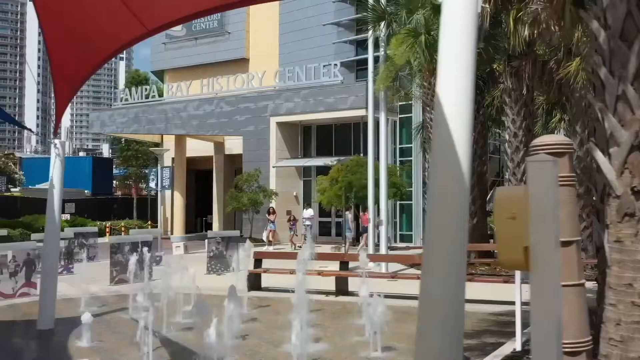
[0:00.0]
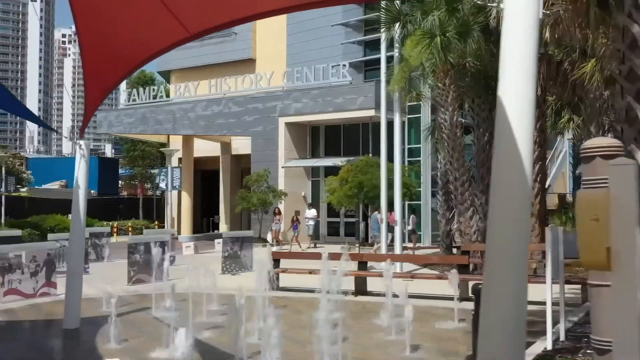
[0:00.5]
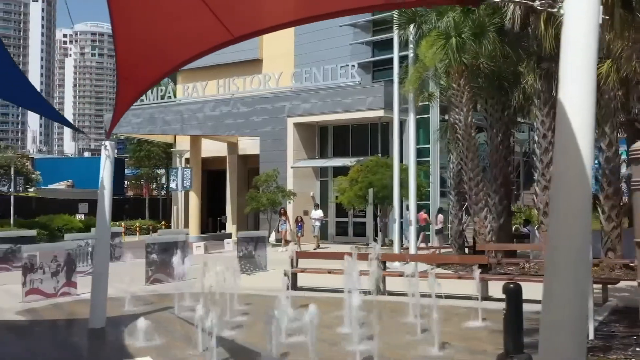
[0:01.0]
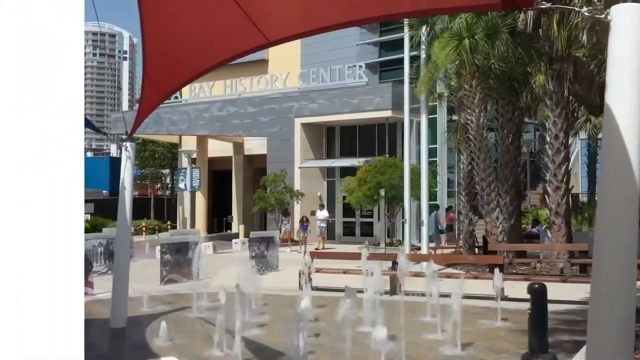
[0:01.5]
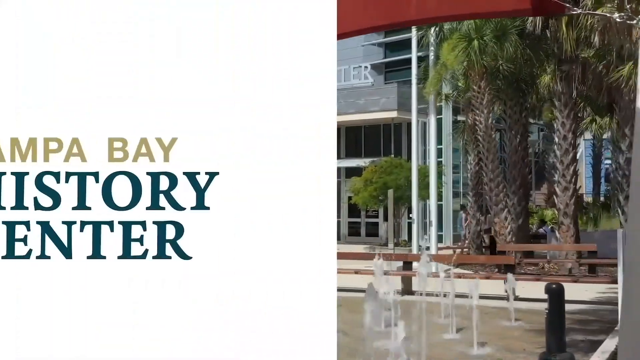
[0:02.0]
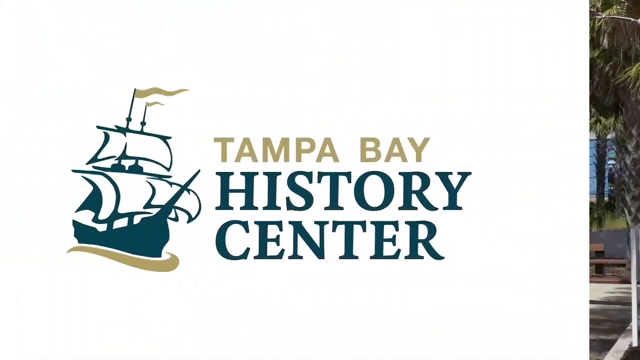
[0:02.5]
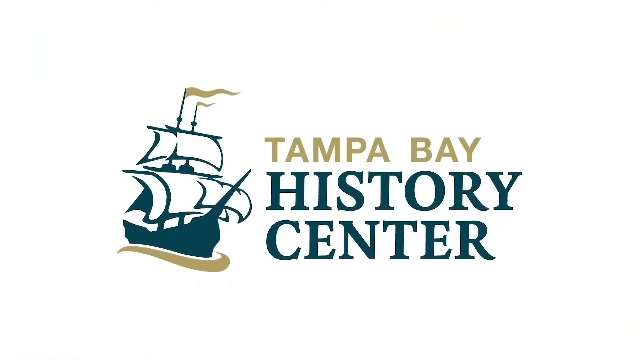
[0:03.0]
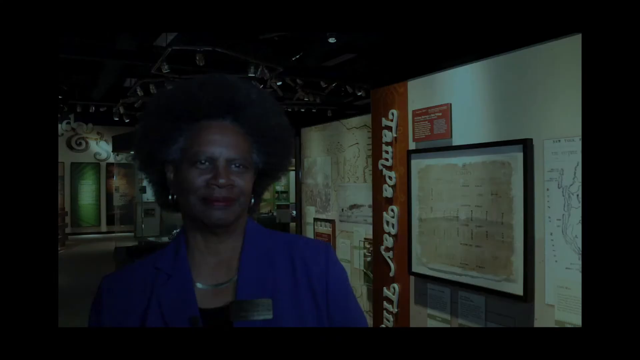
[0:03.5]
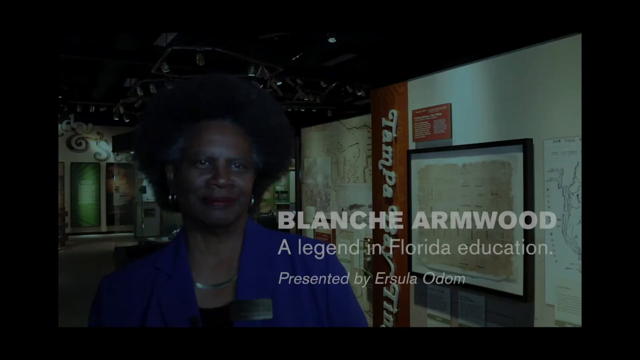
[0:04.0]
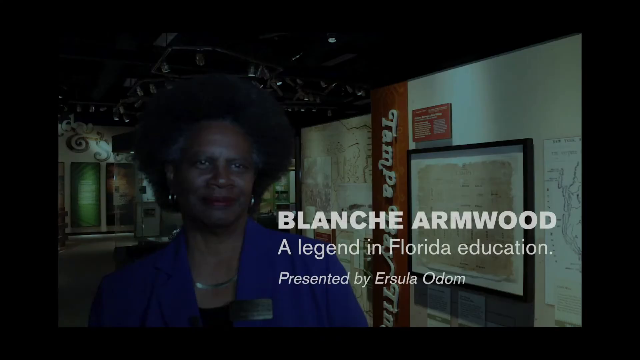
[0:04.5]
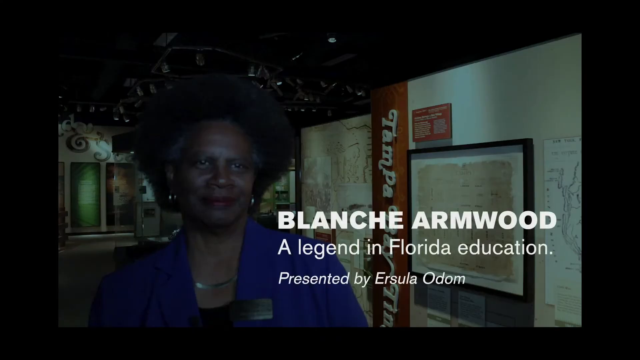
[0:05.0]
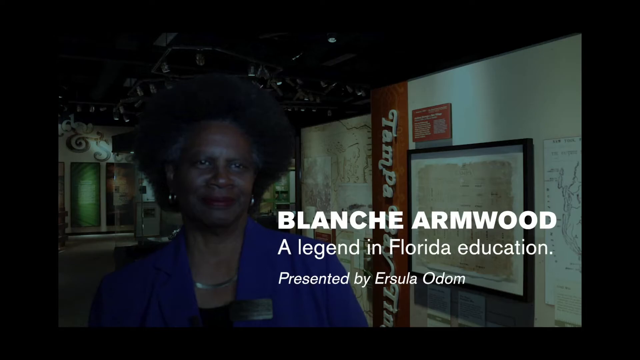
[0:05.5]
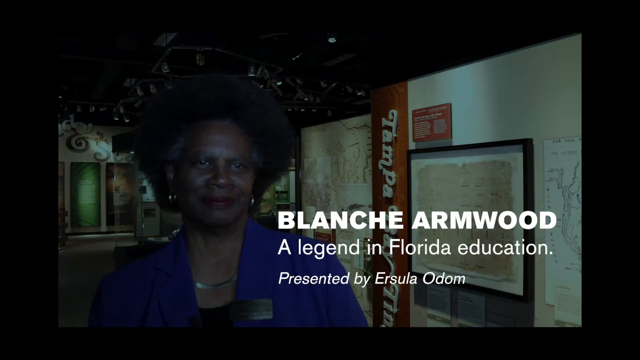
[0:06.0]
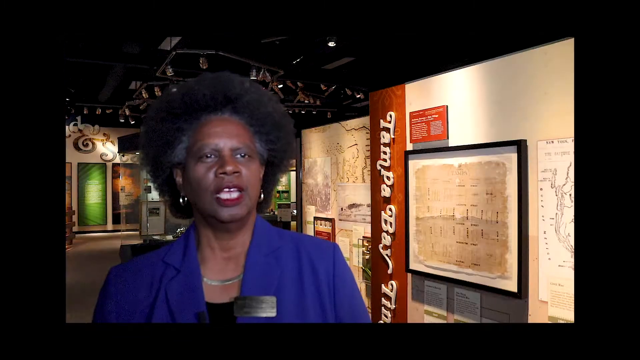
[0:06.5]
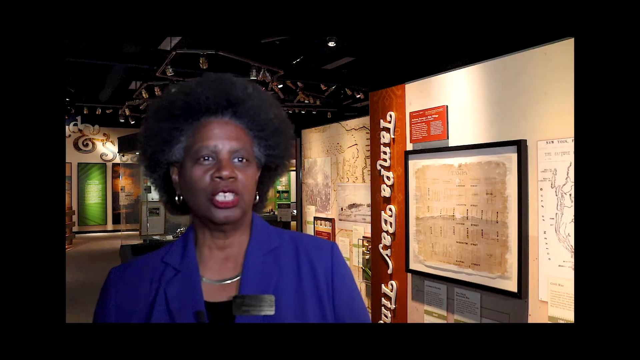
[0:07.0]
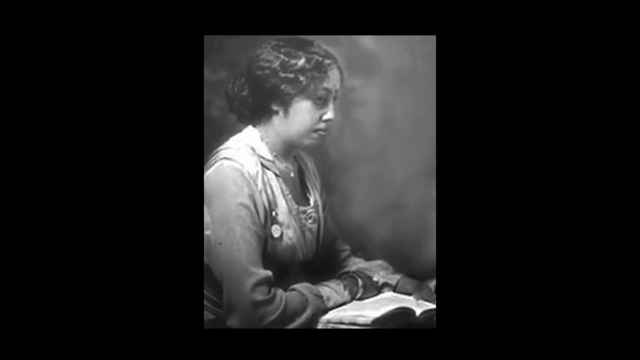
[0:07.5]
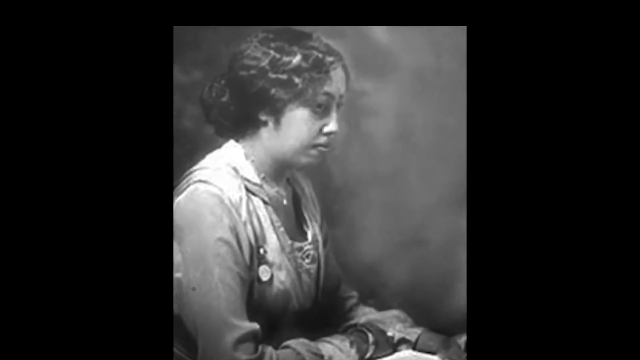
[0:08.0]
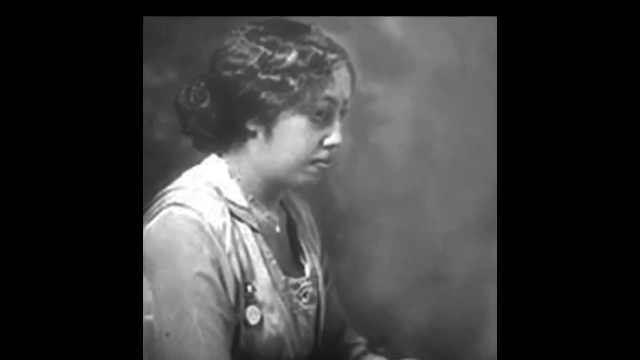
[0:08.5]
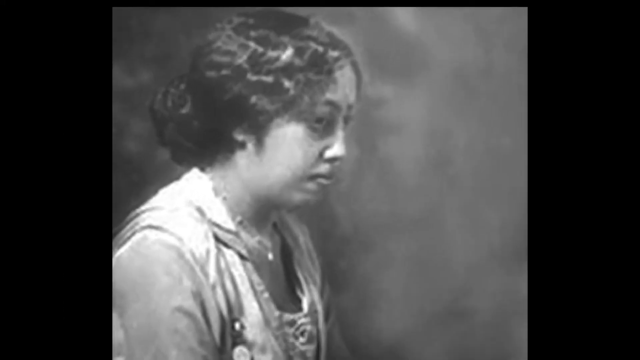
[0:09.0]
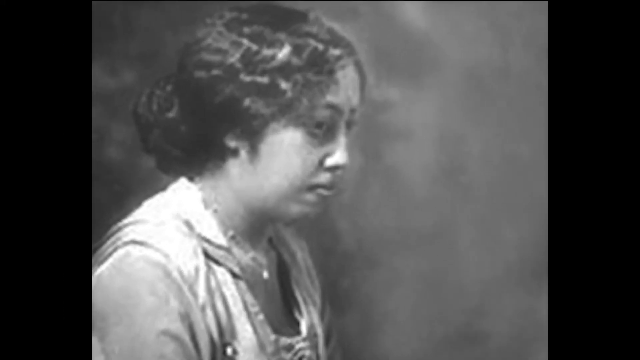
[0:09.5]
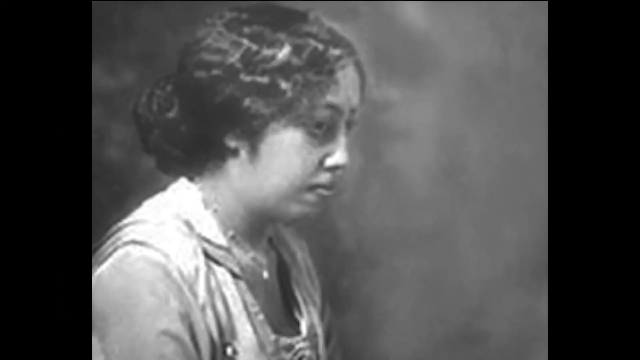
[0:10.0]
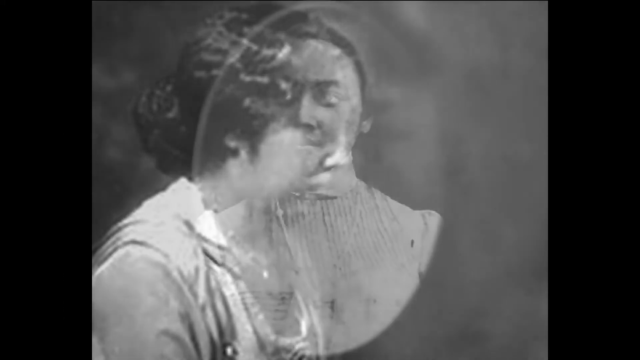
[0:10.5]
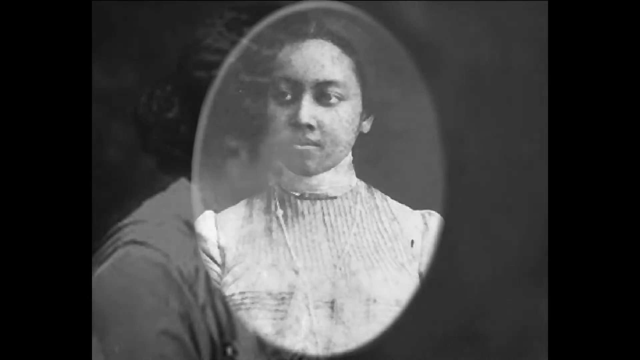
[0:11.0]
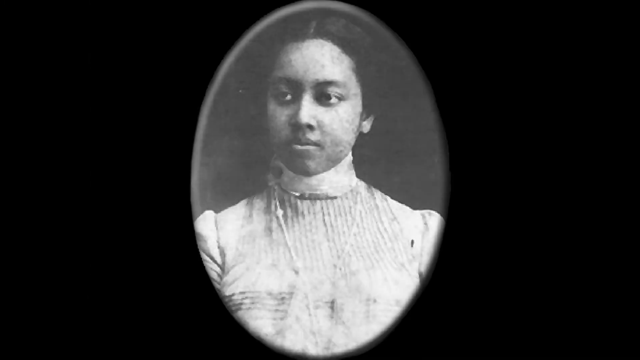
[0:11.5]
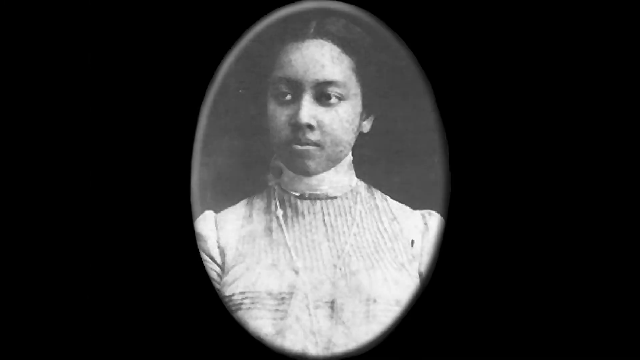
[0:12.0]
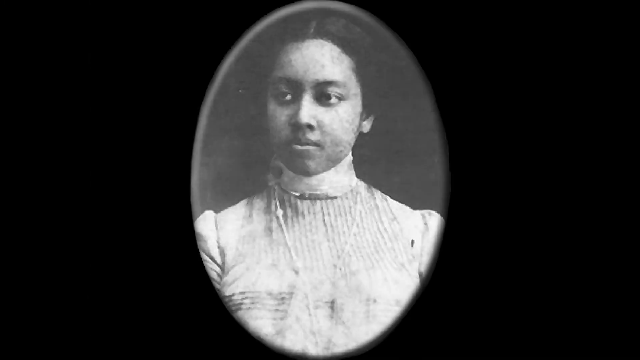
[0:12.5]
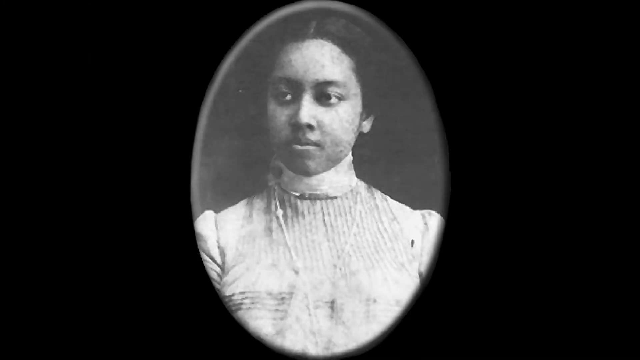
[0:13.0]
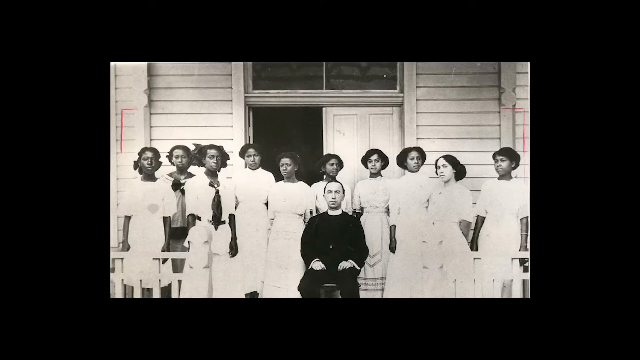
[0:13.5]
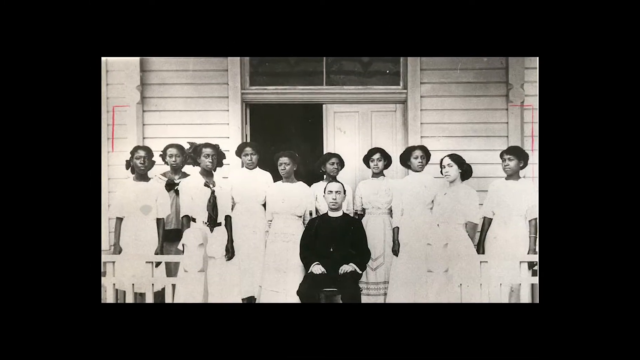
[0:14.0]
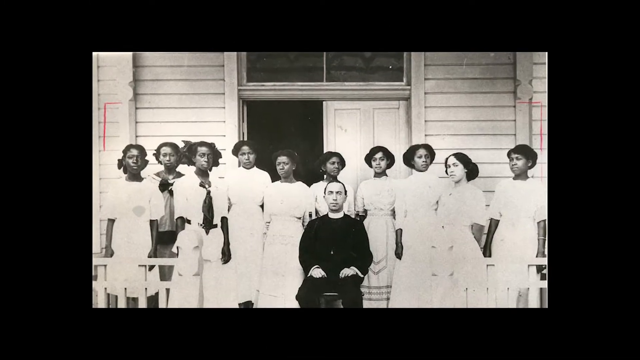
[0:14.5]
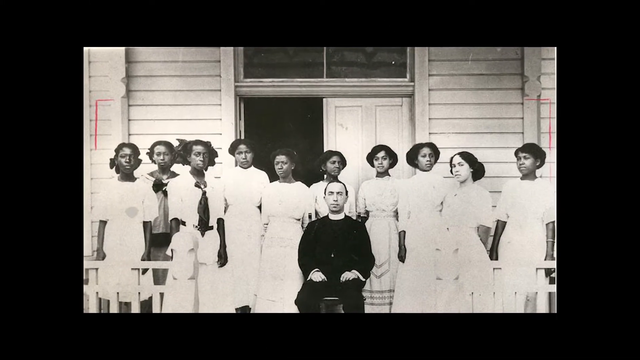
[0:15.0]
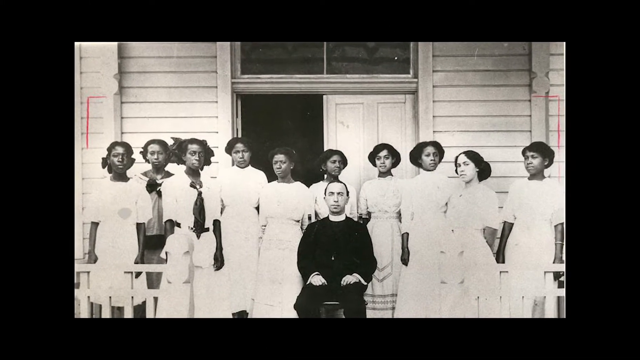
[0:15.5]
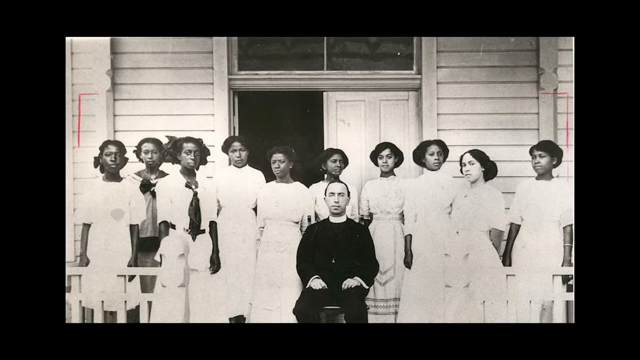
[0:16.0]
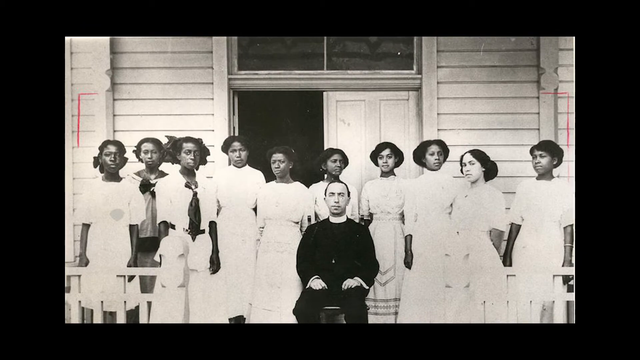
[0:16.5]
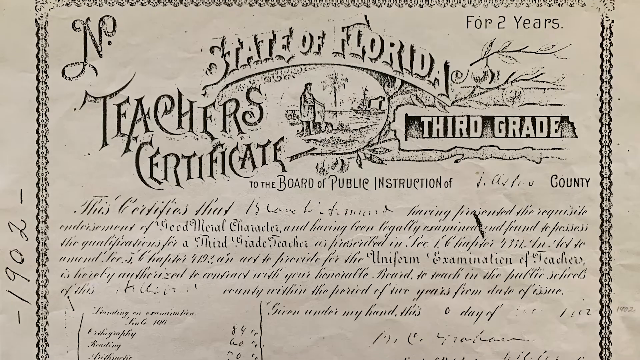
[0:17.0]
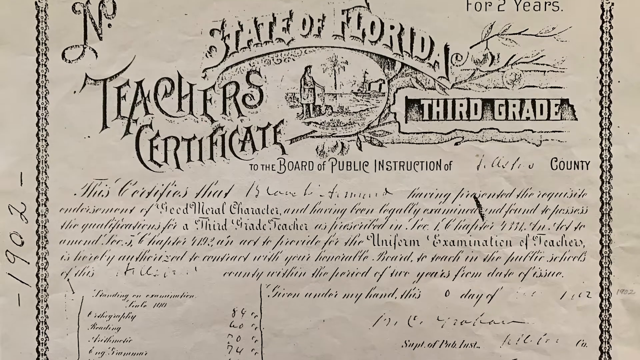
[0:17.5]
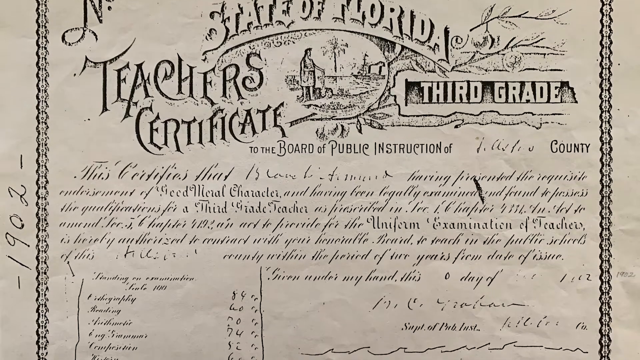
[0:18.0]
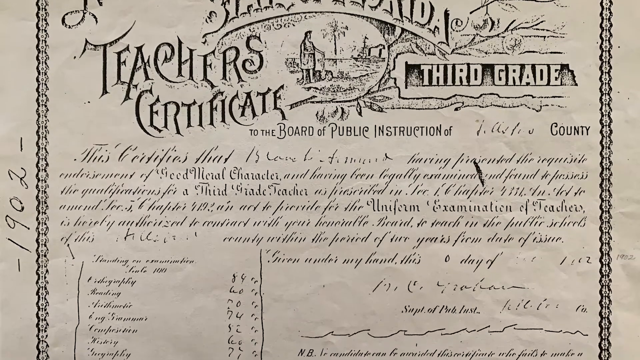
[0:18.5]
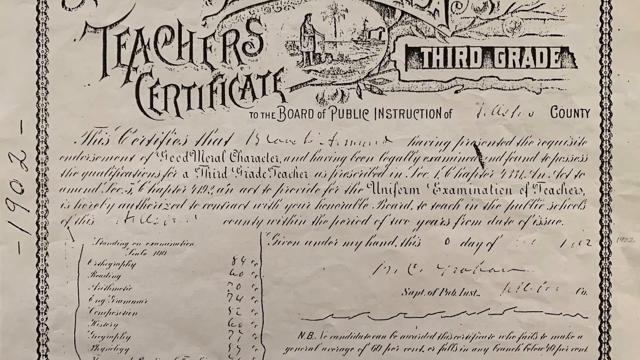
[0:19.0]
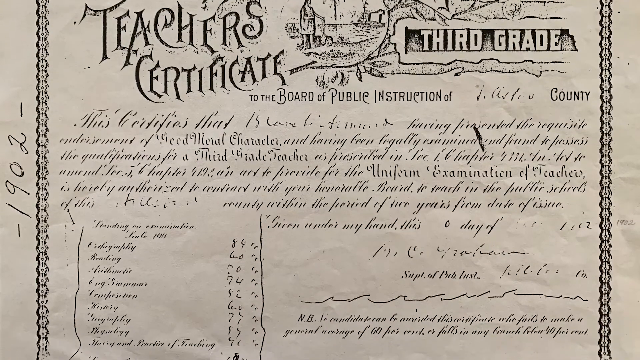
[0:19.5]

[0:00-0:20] The video opens on downtown Tampa. Tampa Bay History Center is shown along with the title "Blanche Armwood. A legend in Florida education, presented by Ersula Odom." A woman in a blue dress is speaking; she looks to be standing inside some type of museum. A black-and-white side profile of a woman appears; her hair is in a bun, and the image looks like it is probably from the early 1900s. Next is a picture of a woman looking kind of straight ahead, wearing a white blouse or dress. Then comes a picture of what look to be young ladies, all young African-American women, standing in front of what looks like a schoolhouse, with someone seated in front of them who is possibly a teacher or possibly a pastor. A State of Florida teacher certificate follows; it says "third grade" and looks like it is from 1902.